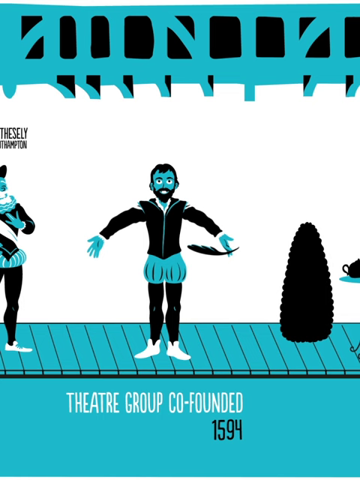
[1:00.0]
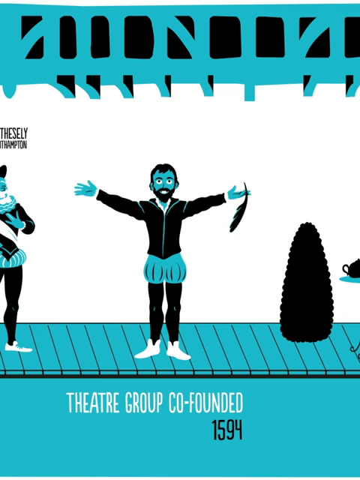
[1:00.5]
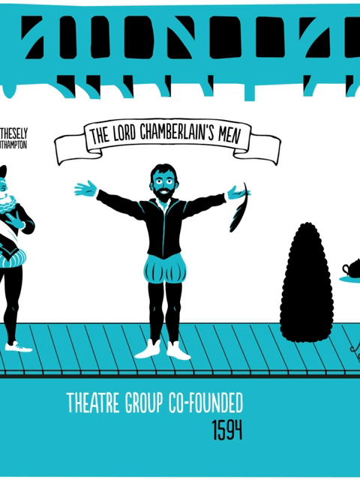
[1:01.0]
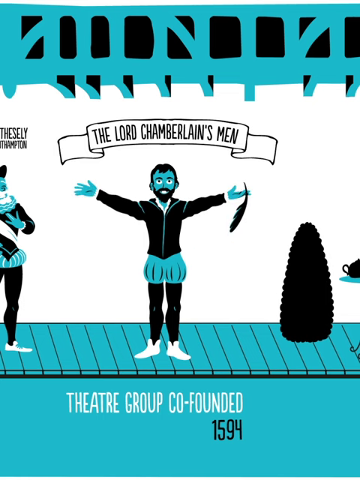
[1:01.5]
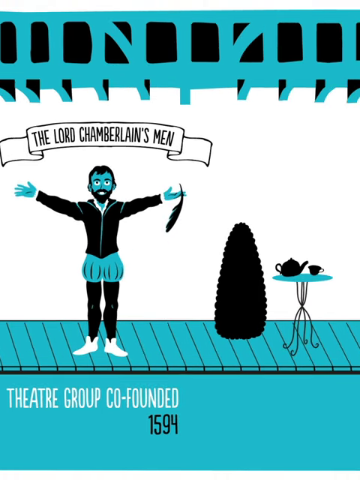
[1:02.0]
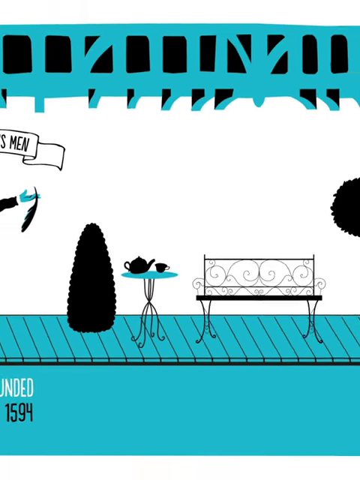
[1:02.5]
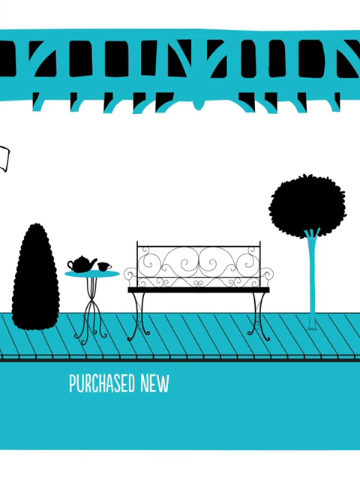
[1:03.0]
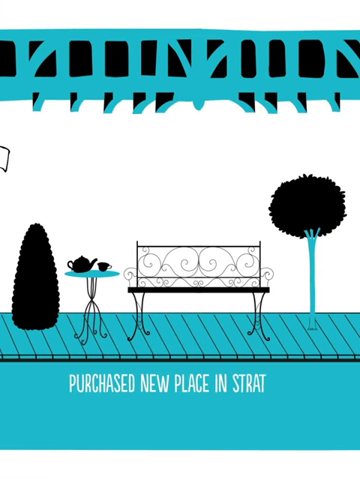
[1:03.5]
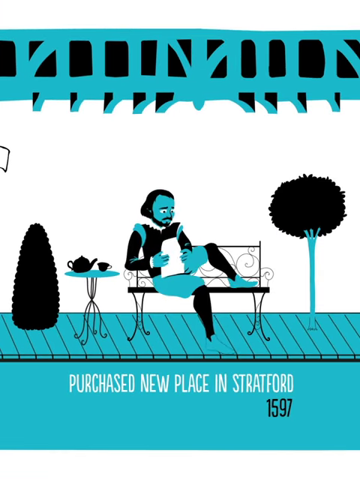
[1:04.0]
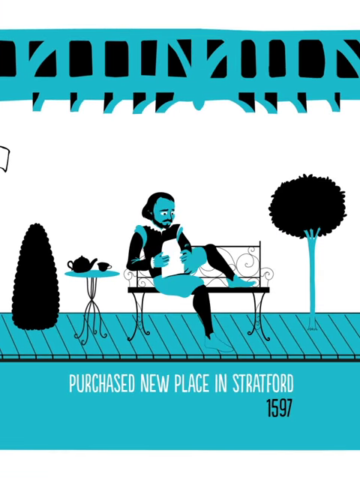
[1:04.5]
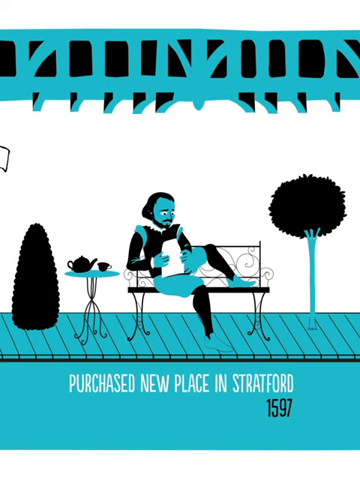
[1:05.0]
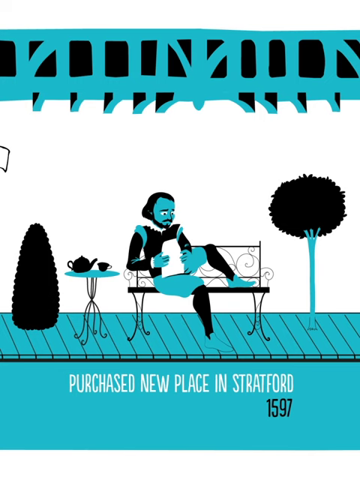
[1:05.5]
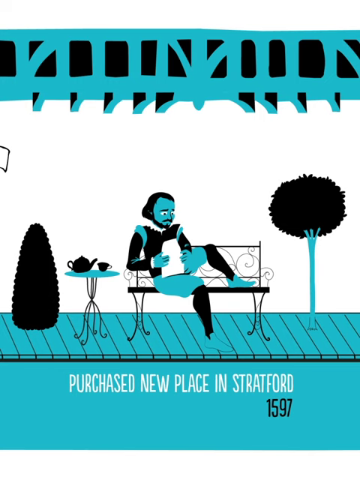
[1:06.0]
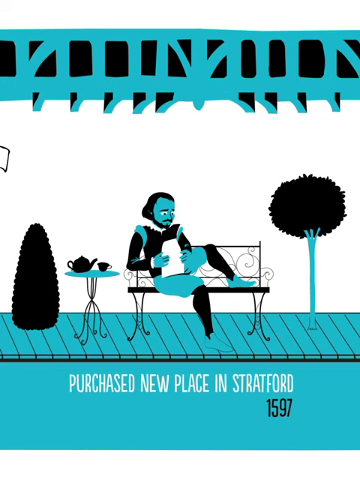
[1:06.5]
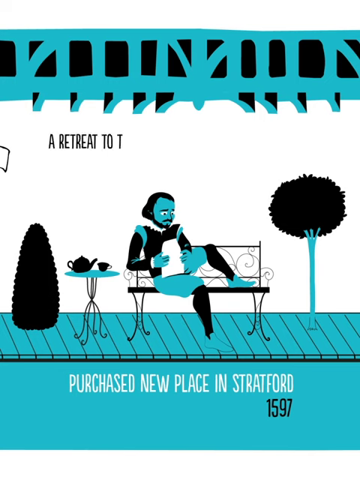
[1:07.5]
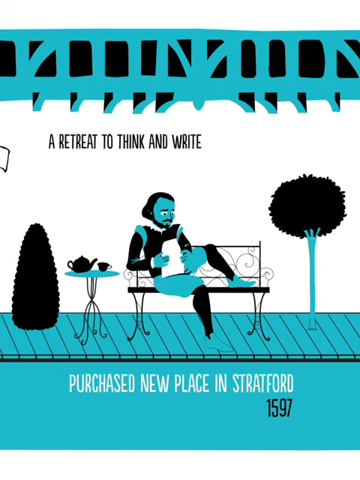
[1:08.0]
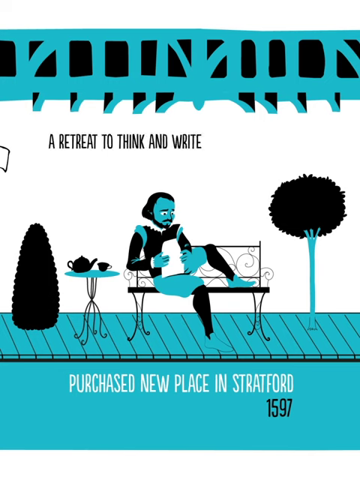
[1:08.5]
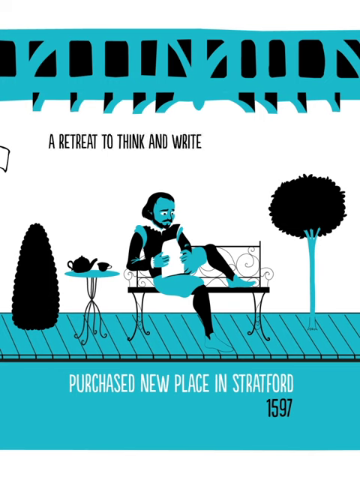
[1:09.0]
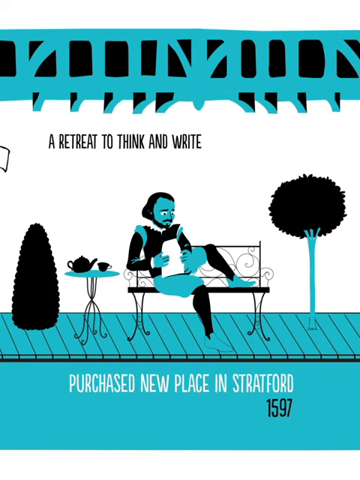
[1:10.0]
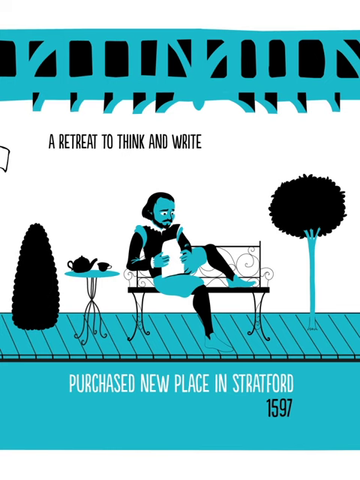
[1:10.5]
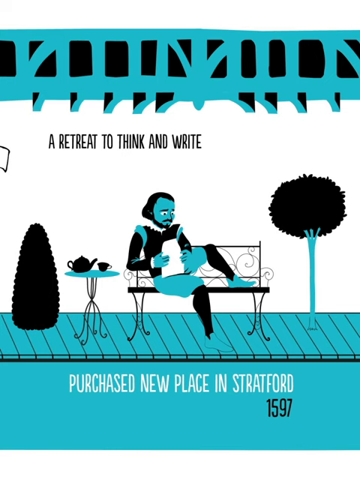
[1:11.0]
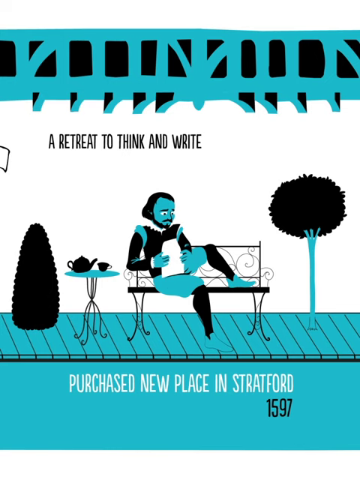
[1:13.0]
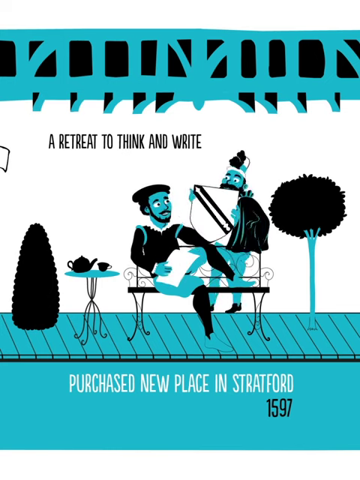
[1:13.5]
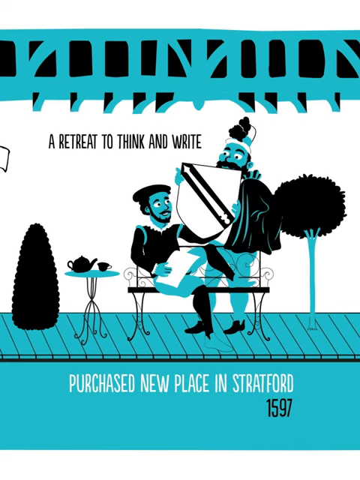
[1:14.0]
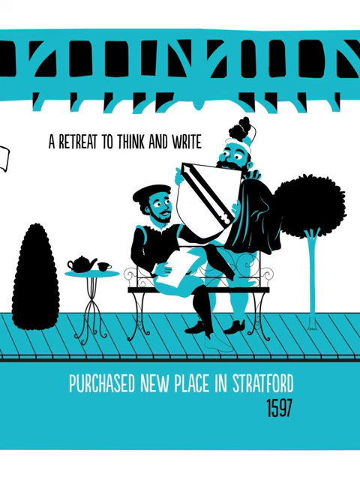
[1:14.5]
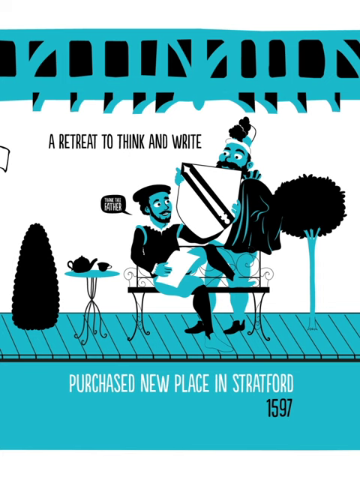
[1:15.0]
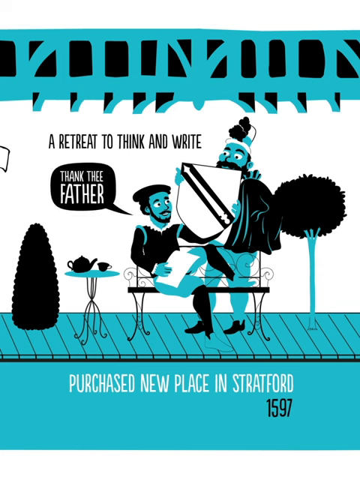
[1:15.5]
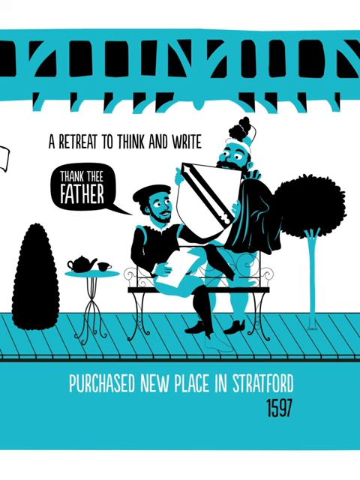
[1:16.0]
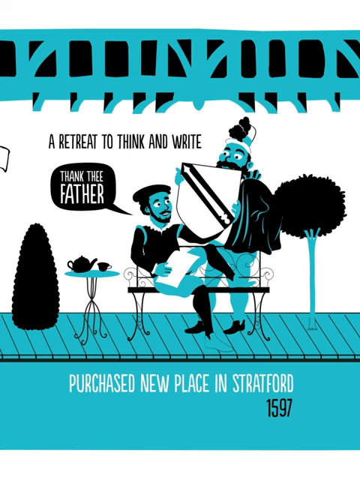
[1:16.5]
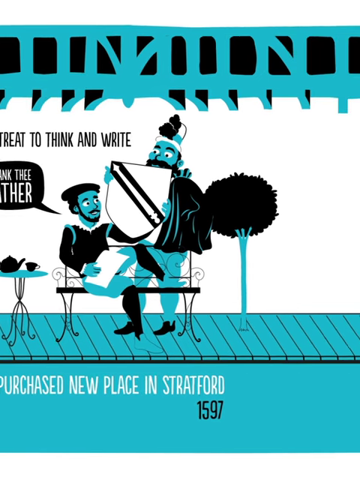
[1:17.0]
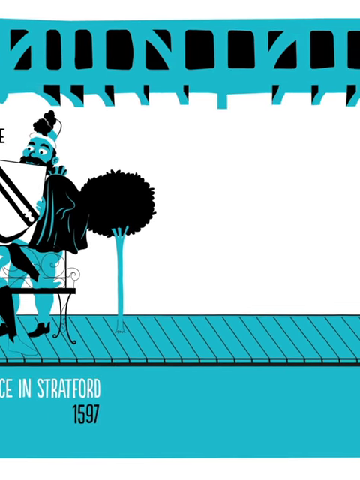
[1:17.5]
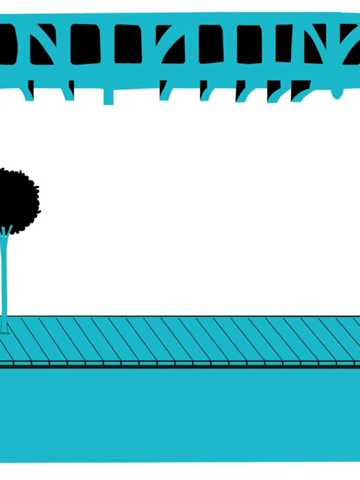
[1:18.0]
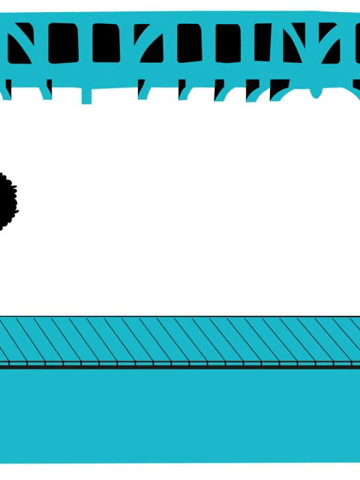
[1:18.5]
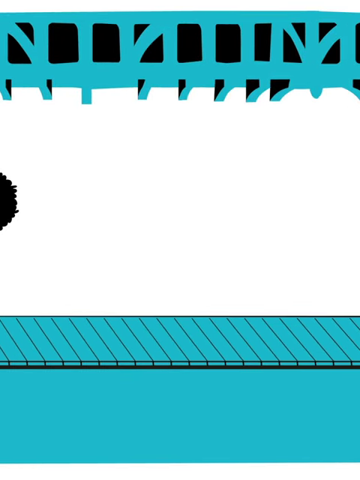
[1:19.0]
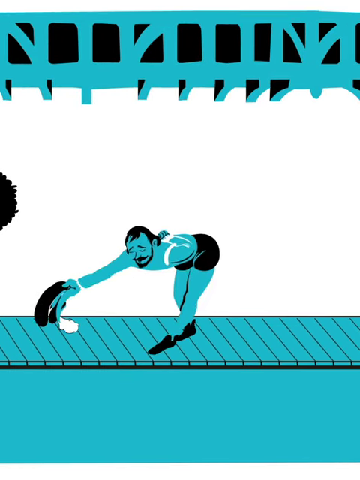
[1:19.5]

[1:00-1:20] The animation, entirely in blue, black, and white, shows moments from William Shakespeare's life in chronological order, with the scenes appearing to move across a stage. First, a man dressed in Renaissance clothing stands on the stage above text reading "Theatre Group Co-founded 1594." He holds out his arms with a quill pen in his left hand, and a ribbon banner above him says "The Lord Chamberlain's Men." The camera moves to the right to a bush, a tree, and what looks like a wrought-iron park bench next to a table with a teapot and teacup resting on it. Below this, text appears: "Purchased New Place in Stratford, 1597." A man in Renaissance clothing sits on the bench holding a piece of paper and looking down at it, and the words "A Retreat to Think and Write" appear above him. Another man appears behind the bench, holding a large shield that appears to have a pen graphic on it, and a text bubble next to the seated man says "Thank Thee, Father."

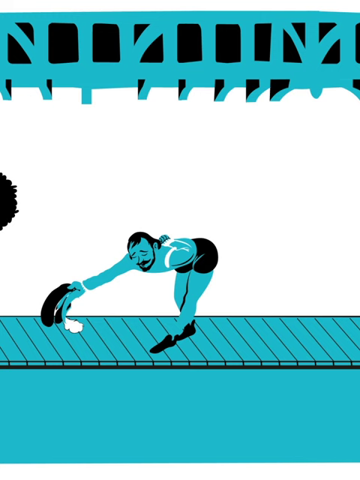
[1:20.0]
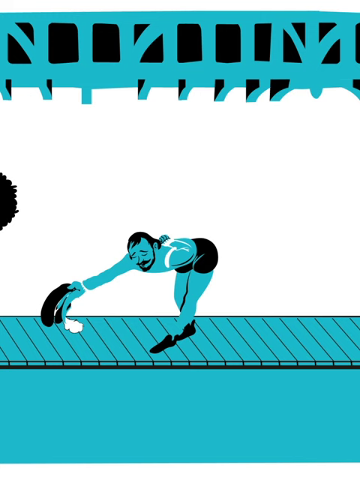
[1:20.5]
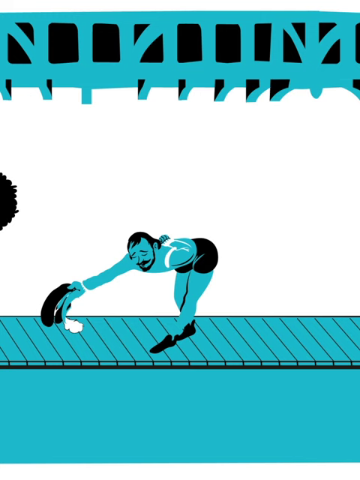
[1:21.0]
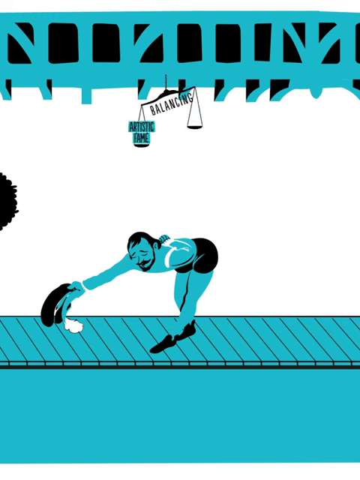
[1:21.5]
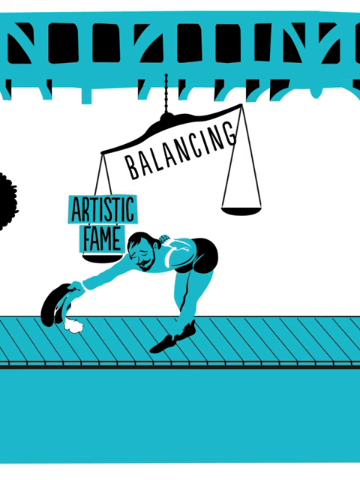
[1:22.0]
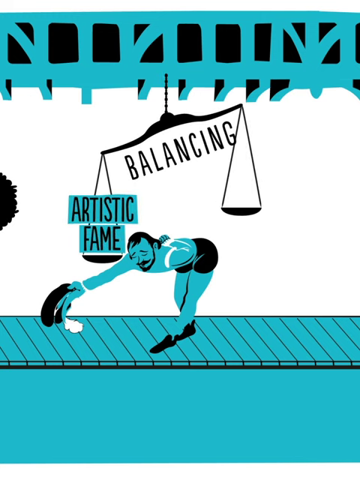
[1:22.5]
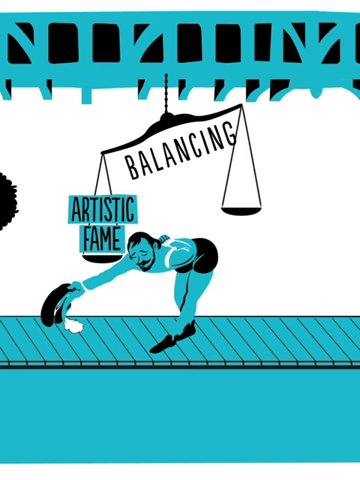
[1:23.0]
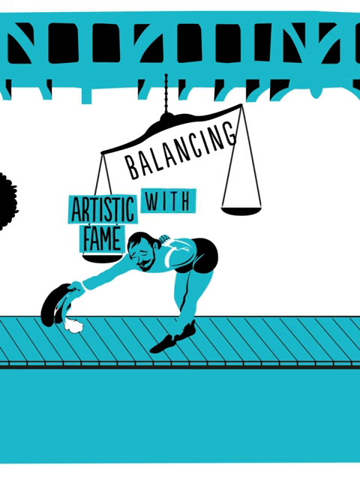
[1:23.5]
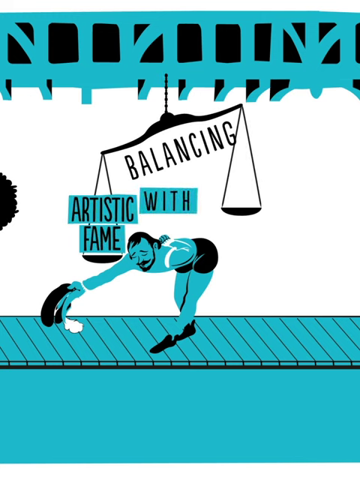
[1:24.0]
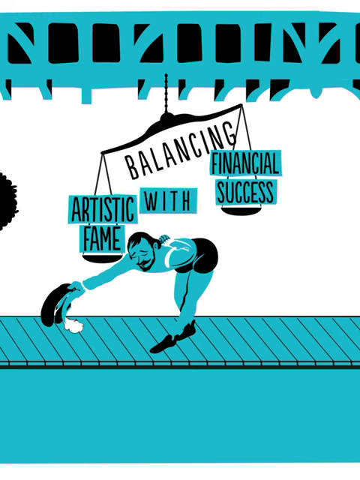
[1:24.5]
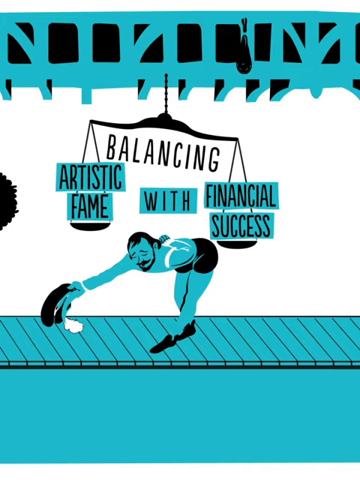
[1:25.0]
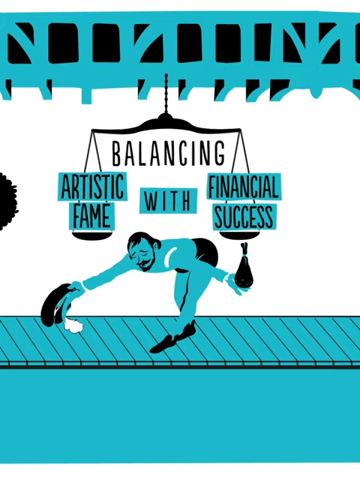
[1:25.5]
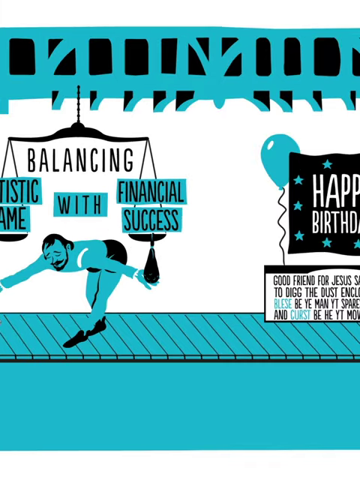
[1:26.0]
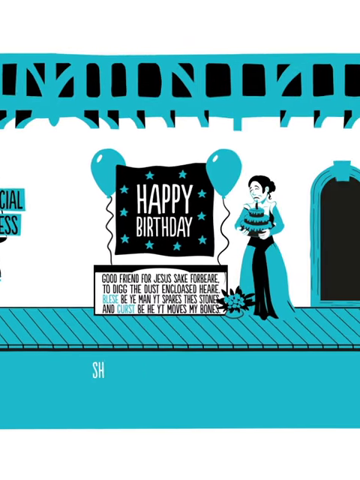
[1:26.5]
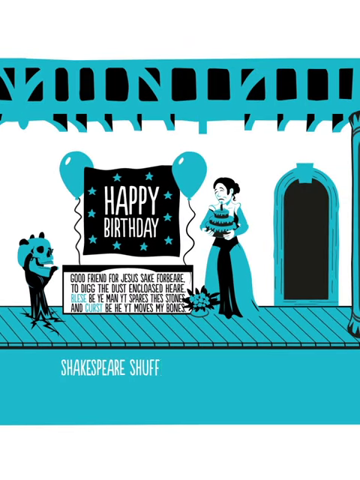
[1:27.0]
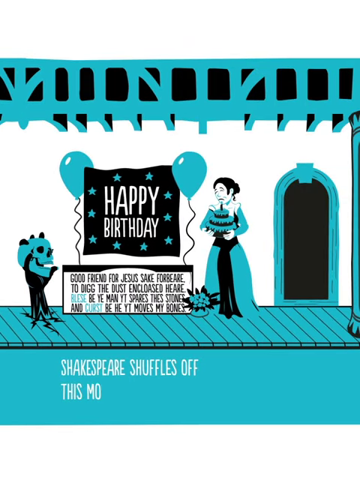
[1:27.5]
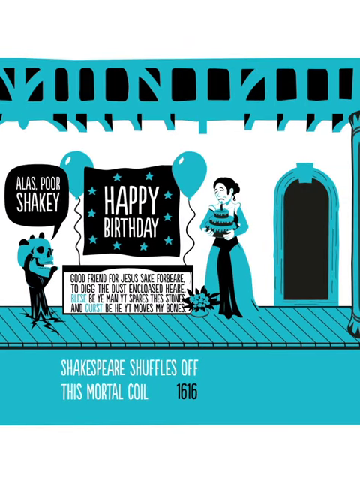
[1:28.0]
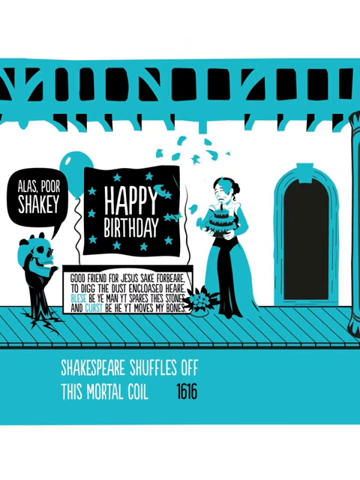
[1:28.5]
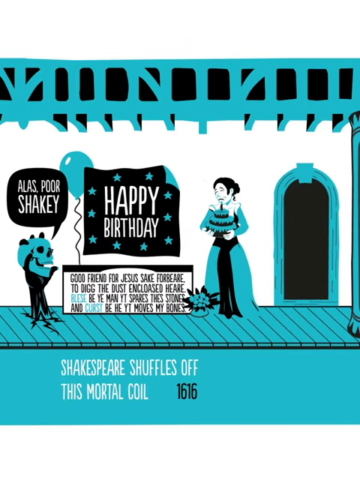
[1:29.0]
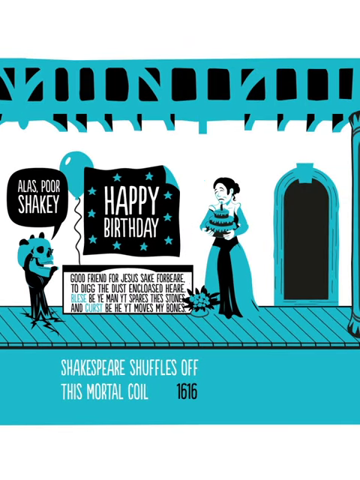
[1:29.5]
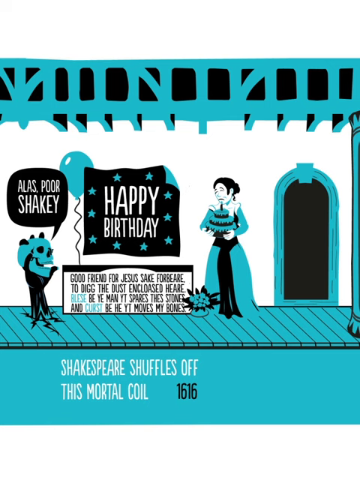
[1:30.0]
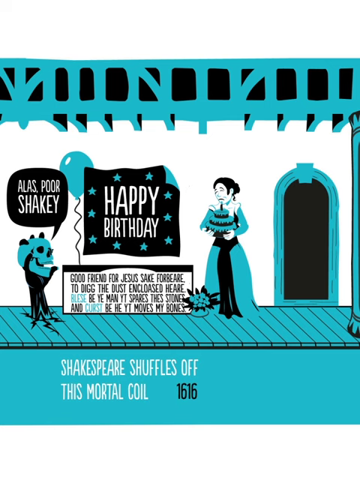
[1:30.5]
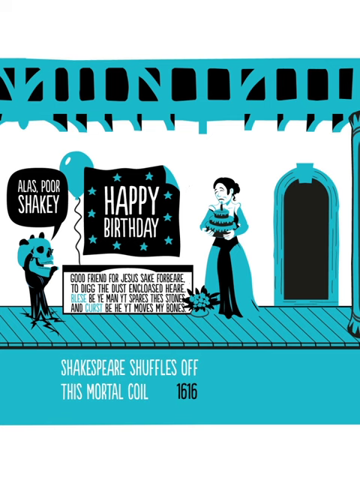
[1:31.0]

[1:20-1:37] The animation depicts moments from William Shakespeare's life in chronological order, moving across a stage. First, a man in Renaissance clothing bows on the stage, holding a black cap with a white feather in his right hand. Above him a graphic of a scale appears, with "artistic fame" on one side and "financial success" on the other, and "balancing with" above it. A small black bag drops from the sky and he catches it in his left hand. The scene changes to a woman in Renaissance clothing holding a three-tiered birthday cake. On the wall behind her are a banner that says "happy birthday" and two blue balloons. Below this is a sign with text from Shakespeare's epitaph, and on the left of the image a black hand breaks through the stage floor holding a blue skull. Text on the front of the screen reads "Shakespeare shuffles off this mortal coil. 1616." A text bubble above the skull says "Alas, poor Shakey."